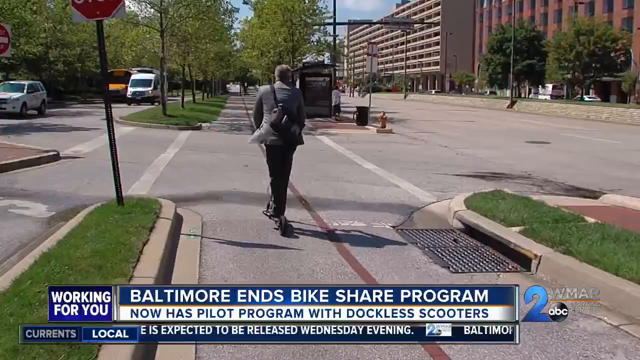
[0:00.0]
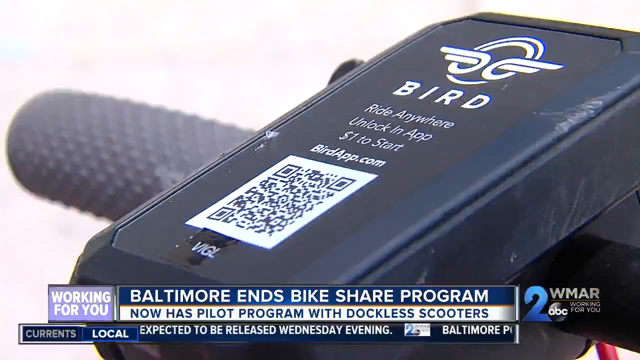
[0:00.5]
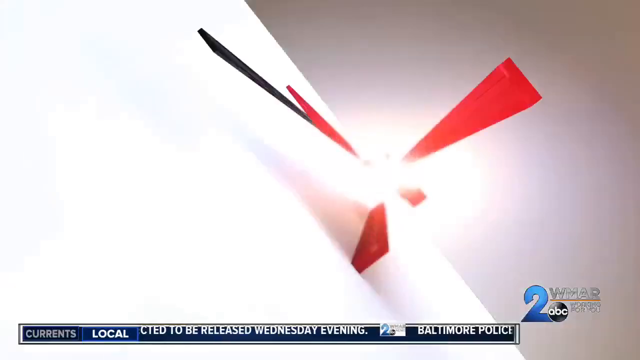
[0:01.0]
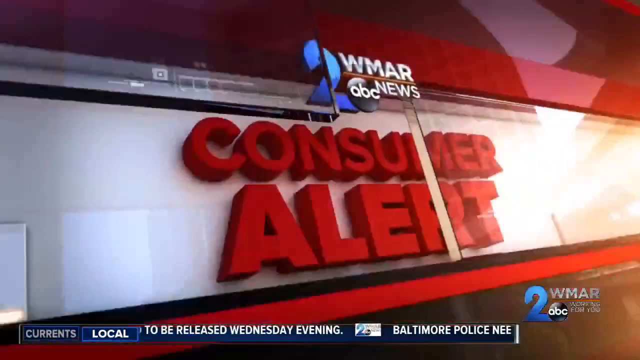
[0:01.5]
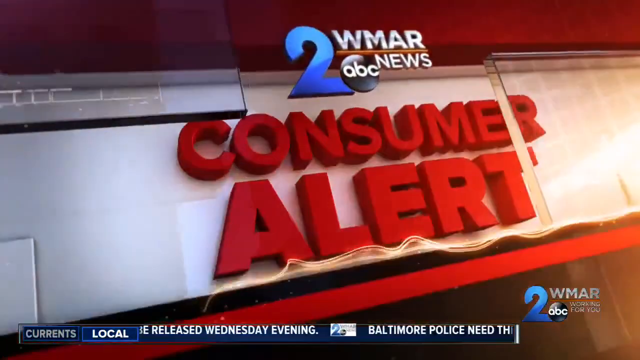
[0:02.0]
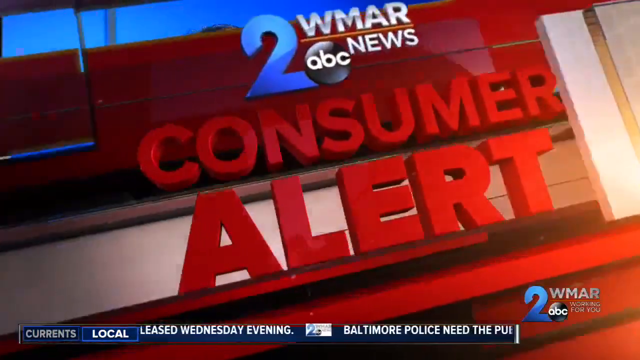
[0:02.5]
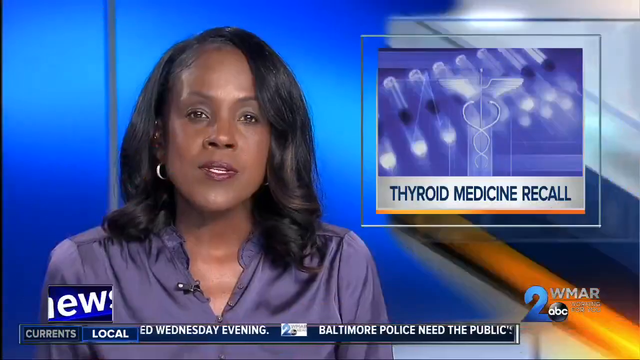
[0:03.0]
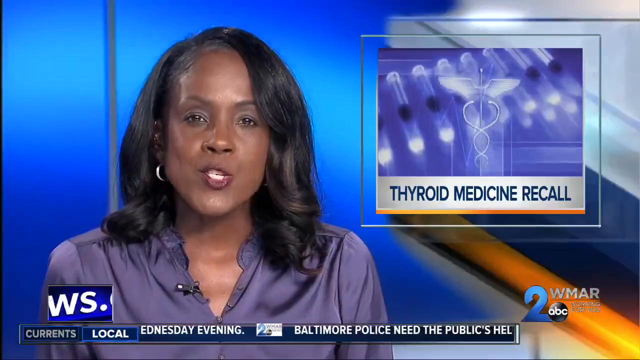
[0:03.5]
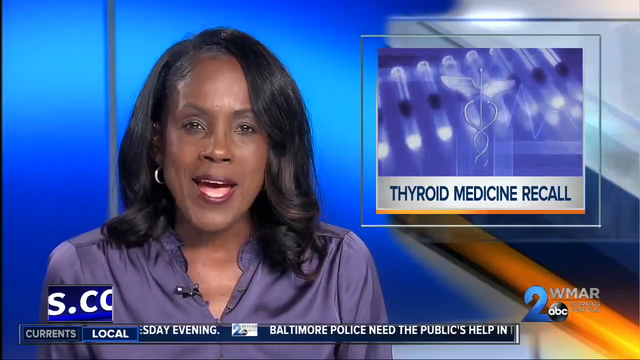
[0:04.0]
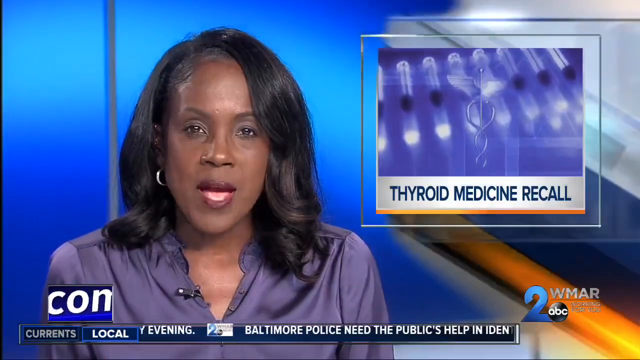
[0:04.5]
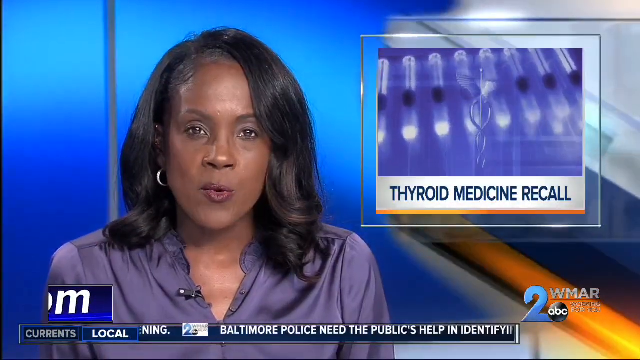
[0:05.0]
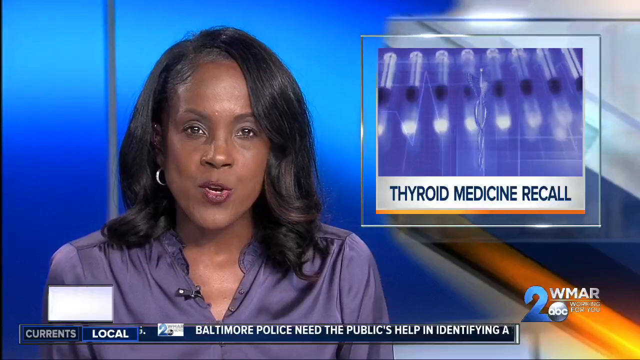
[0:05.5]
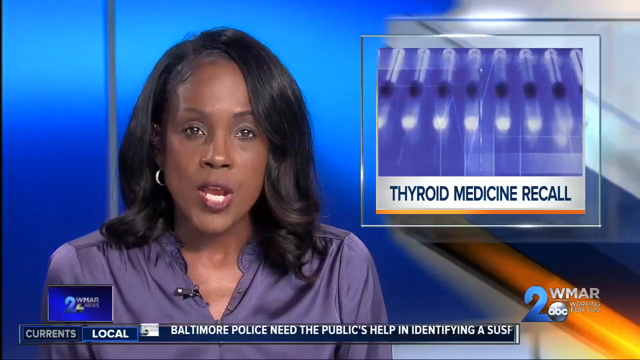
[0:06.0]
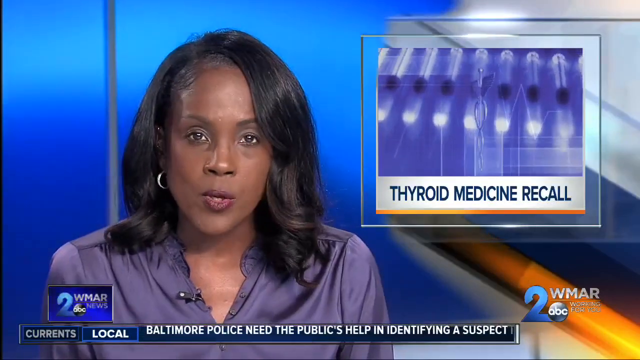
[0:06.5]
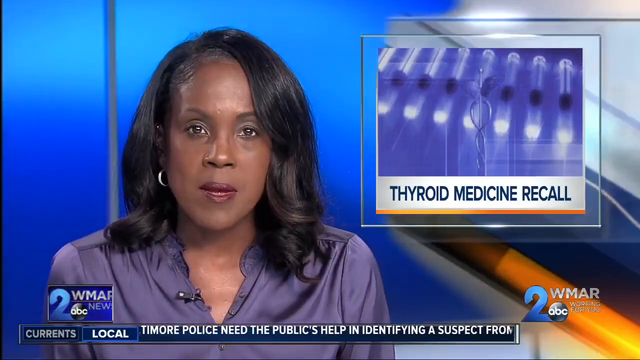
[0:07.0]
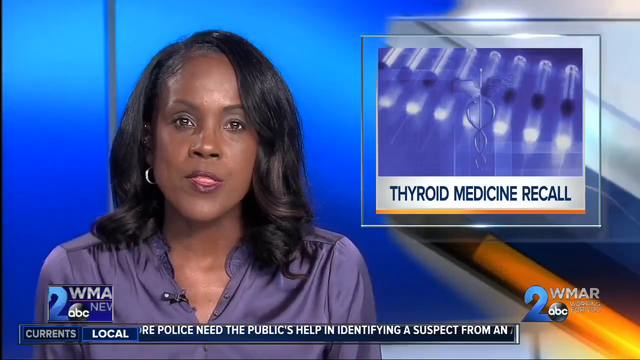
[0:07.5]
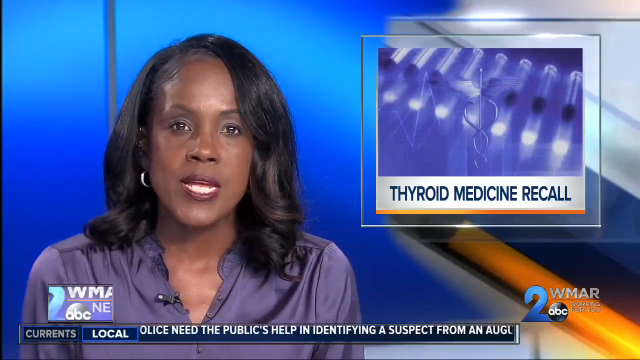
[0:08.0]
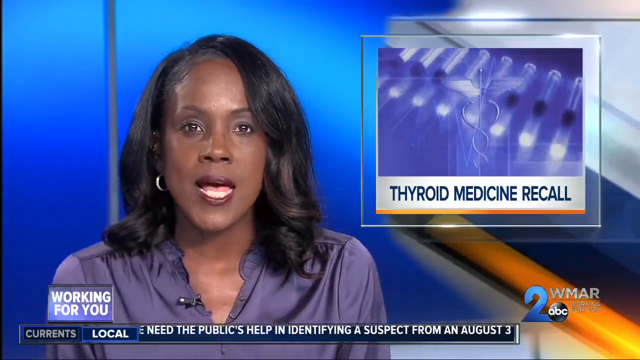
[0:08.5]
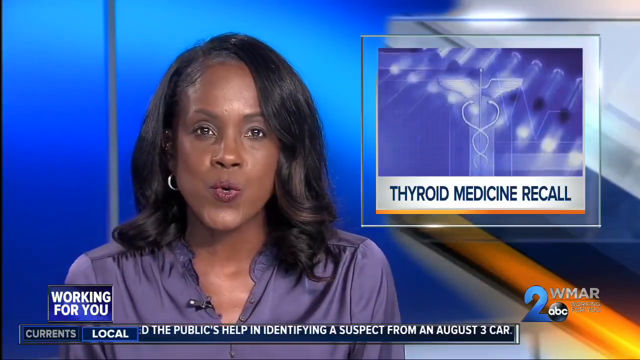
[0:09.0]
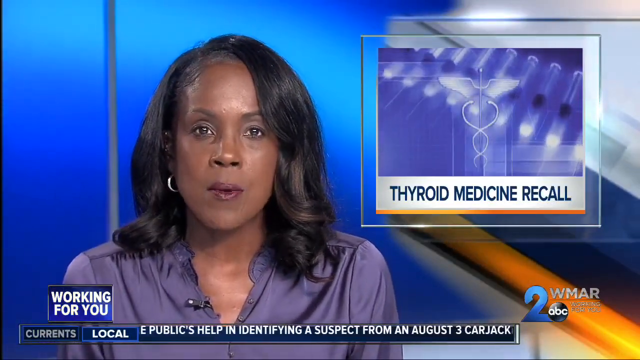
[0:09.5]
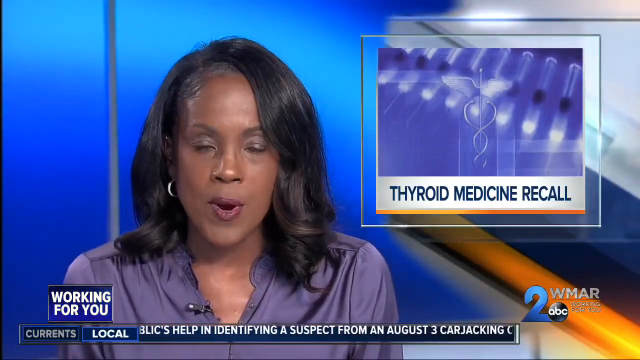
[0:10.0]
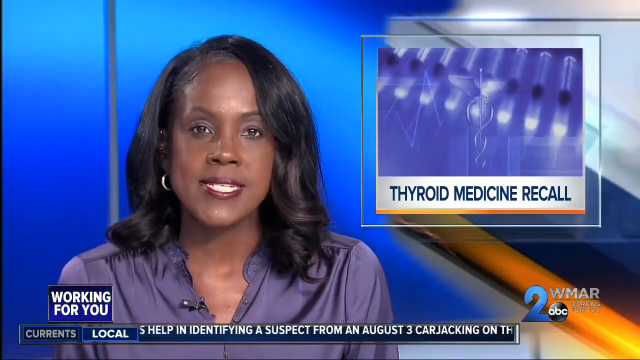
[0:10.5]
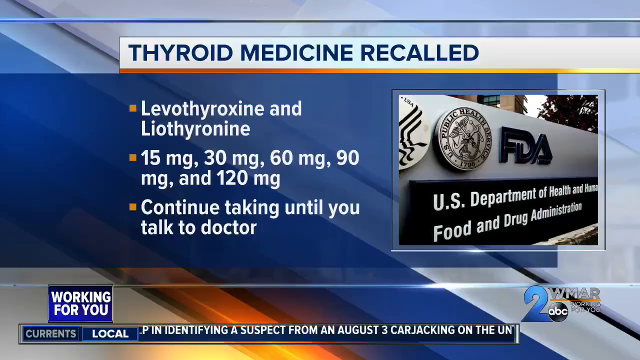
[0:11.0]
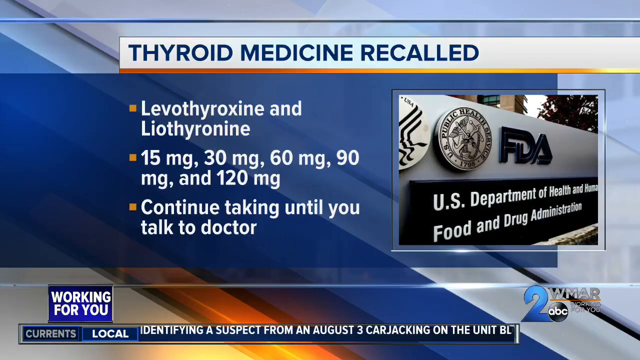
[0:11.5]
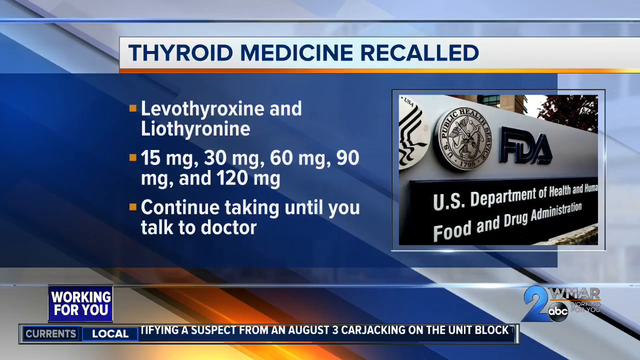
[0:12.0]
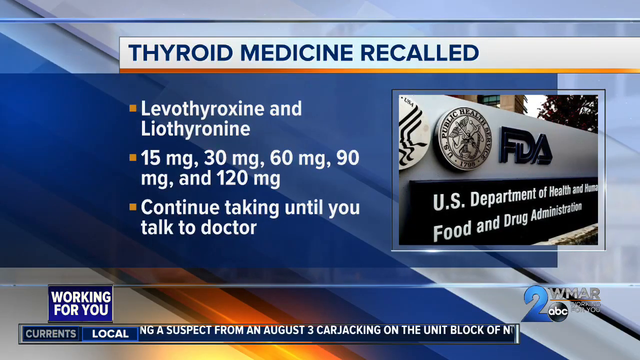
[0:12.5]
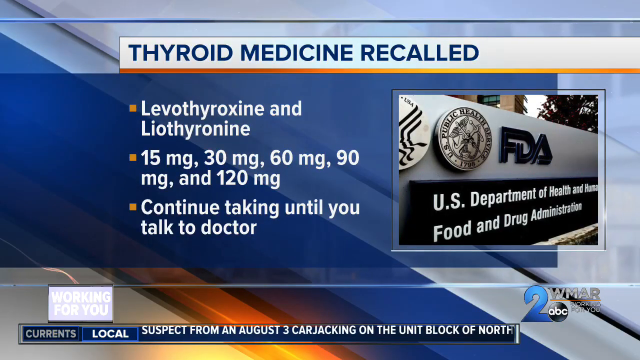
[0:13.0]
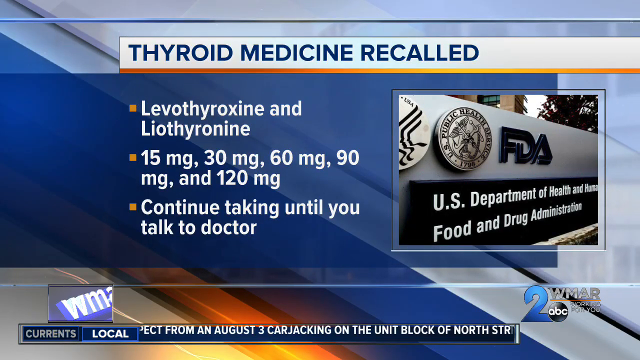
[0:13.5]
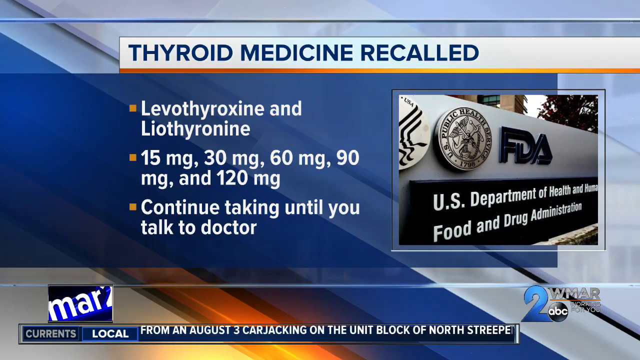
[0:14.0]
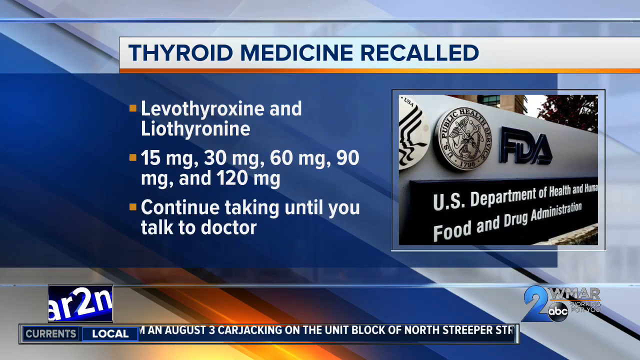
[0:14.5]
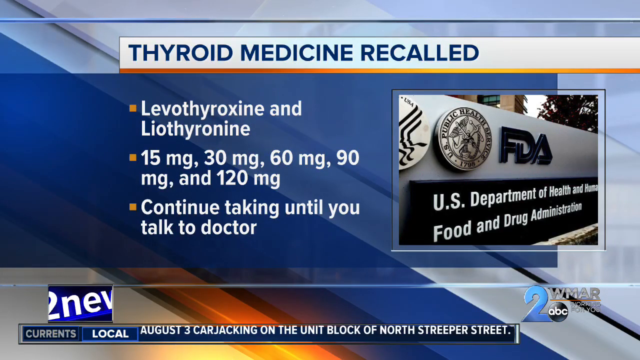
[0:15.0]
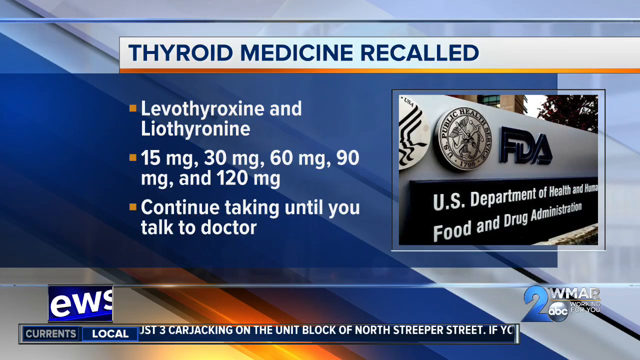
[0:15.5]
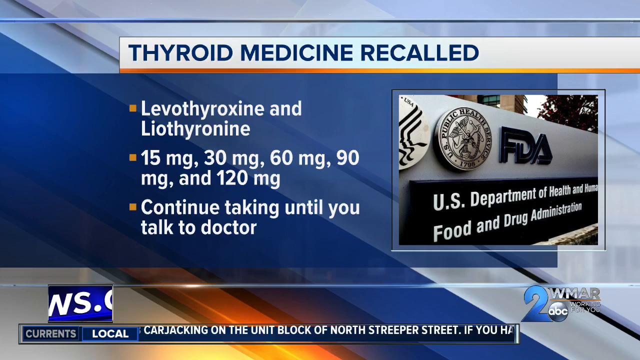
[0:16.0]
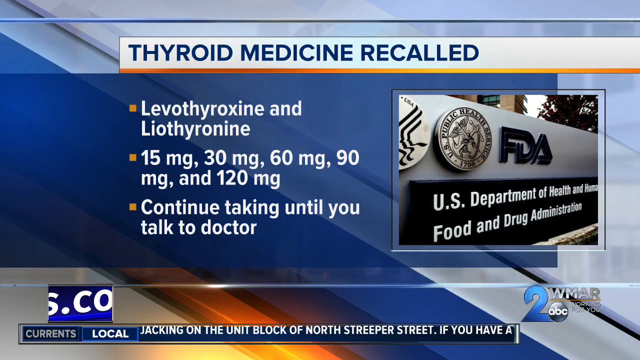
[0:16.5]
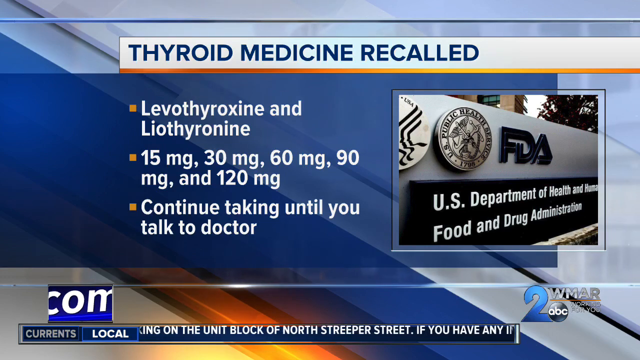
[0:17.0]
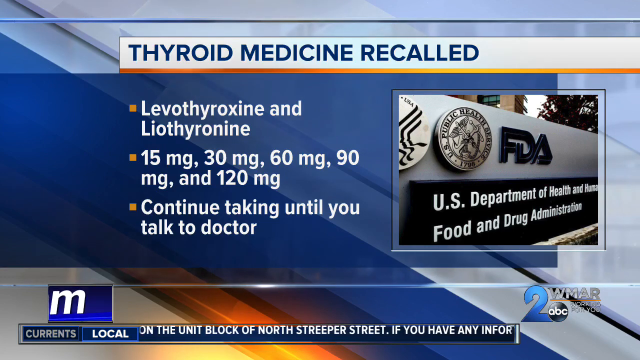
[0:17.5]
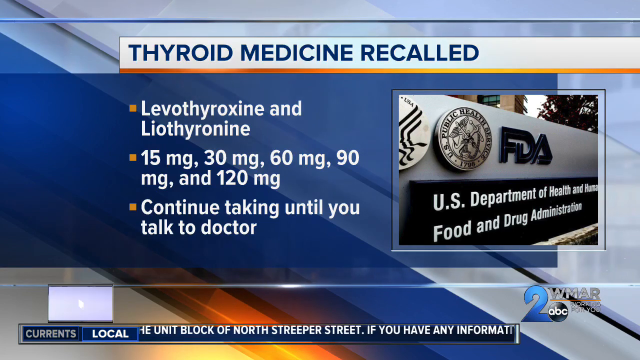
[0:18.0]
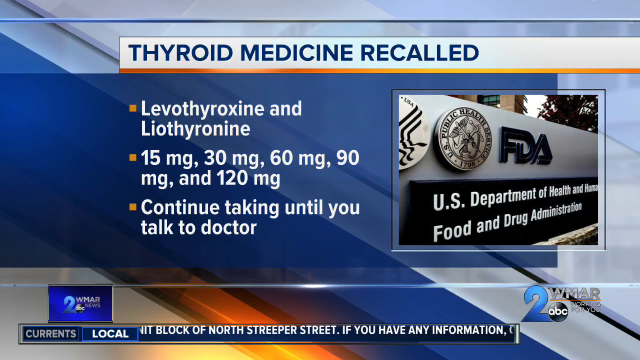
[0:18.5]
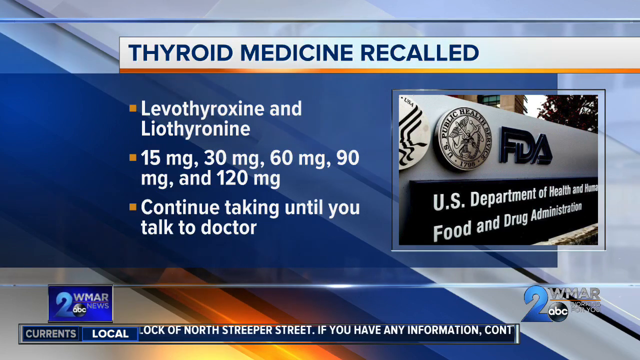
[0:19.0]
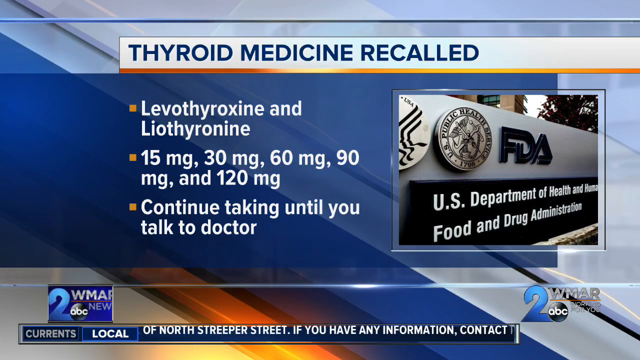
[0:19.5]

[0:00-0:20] The video comes from WMAR 2 ABC News. Outside on a sunny day, a tree-lined street with multiple lanes is shown, with a banner at the bottom that reads "Baltimore ends bikeshare program. Now has pilot program with dockless scooters." An image shows a man in a suit riding a scooter with a bag over his shoulder. There is traffic on one side of the street, and there is a bus waiting station where apparently one person is waiting. The video then moves to a consumer alert: an African American newscaster in a newsroom reports on a thyroid medicine recall, with a very serious look on her face. The outside of the FDA is shown, followed by bullet points about what the medicine is.